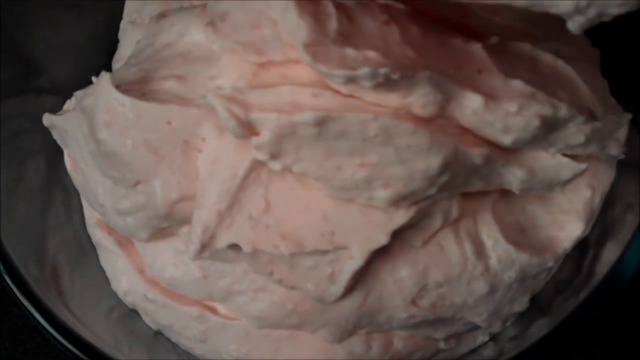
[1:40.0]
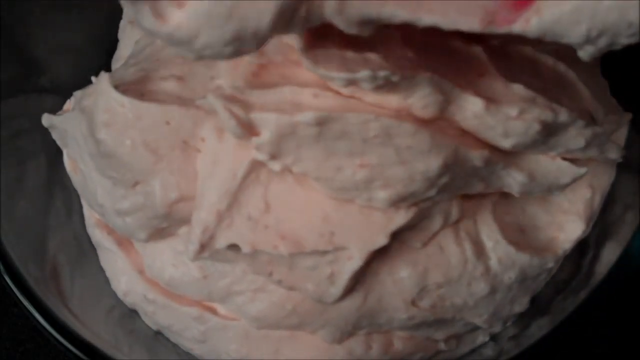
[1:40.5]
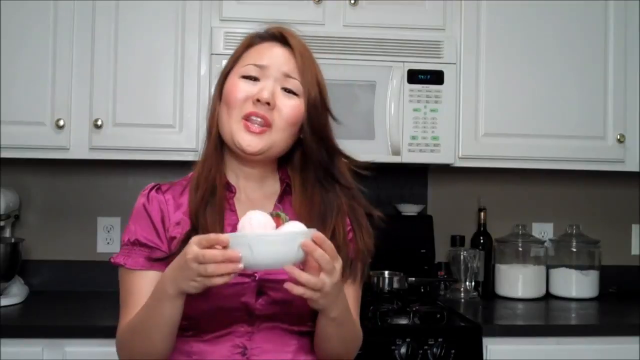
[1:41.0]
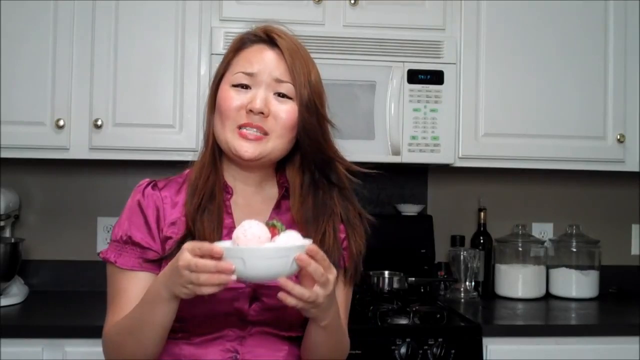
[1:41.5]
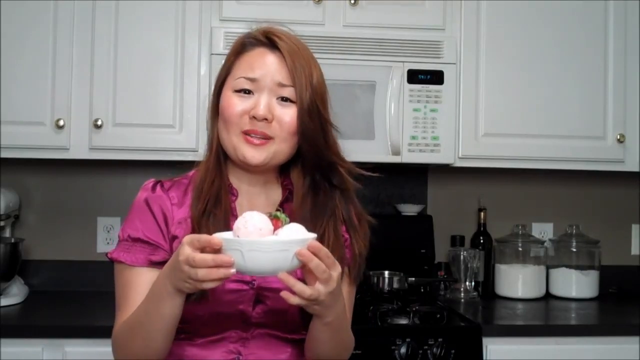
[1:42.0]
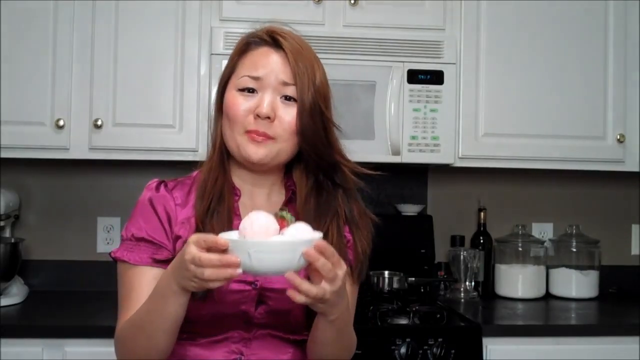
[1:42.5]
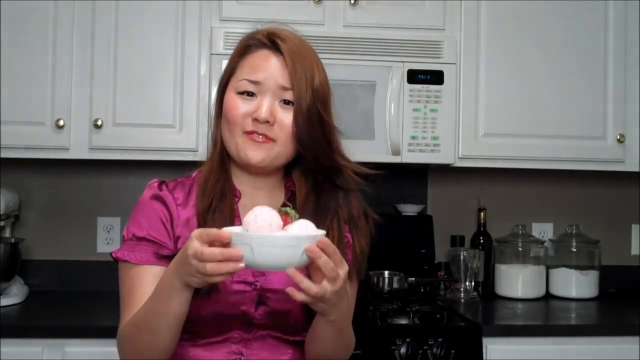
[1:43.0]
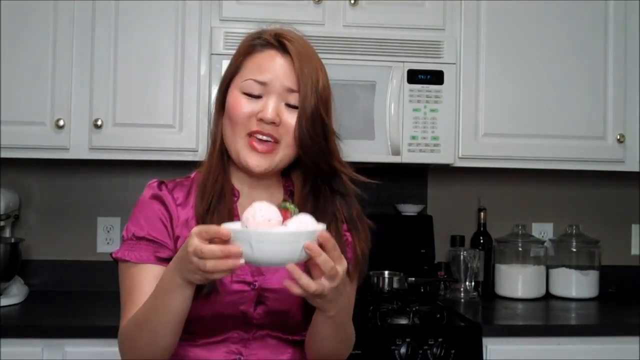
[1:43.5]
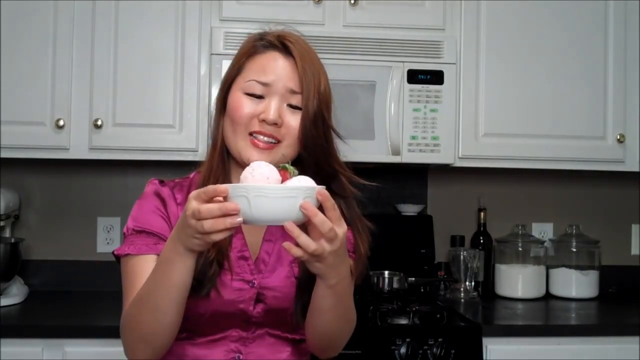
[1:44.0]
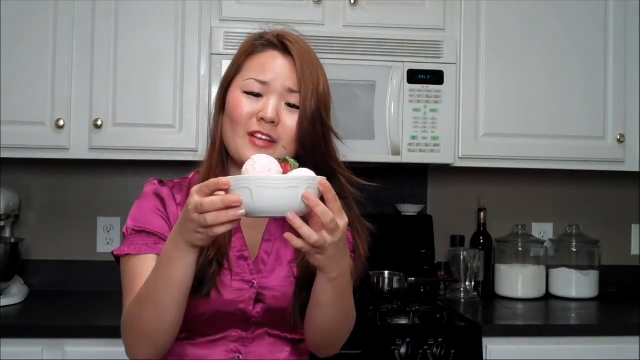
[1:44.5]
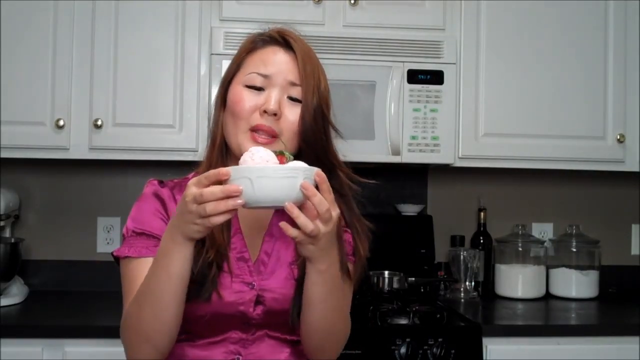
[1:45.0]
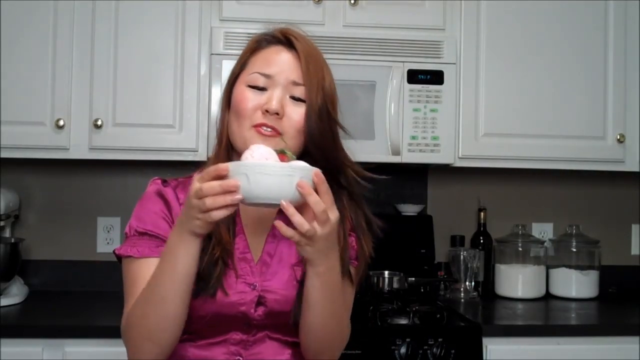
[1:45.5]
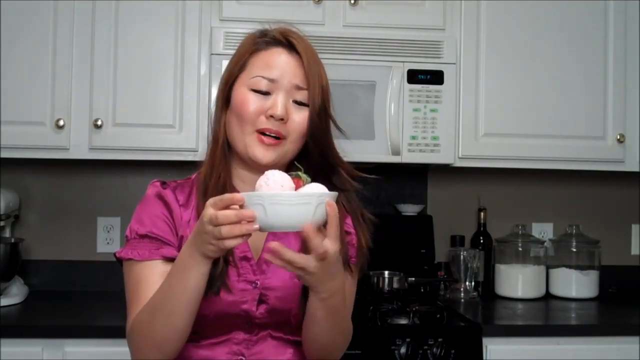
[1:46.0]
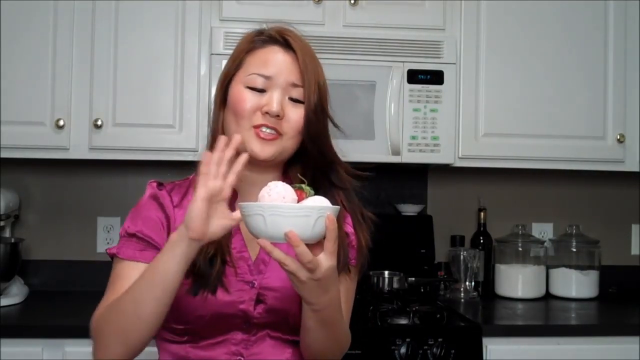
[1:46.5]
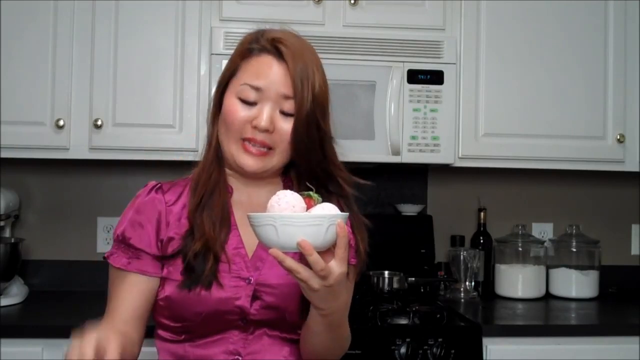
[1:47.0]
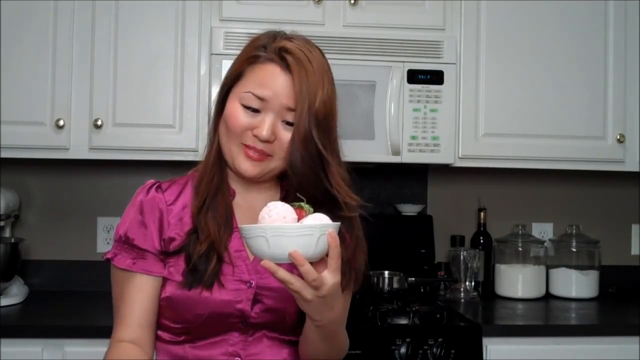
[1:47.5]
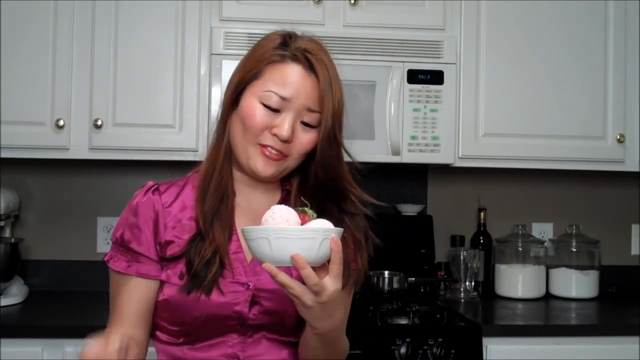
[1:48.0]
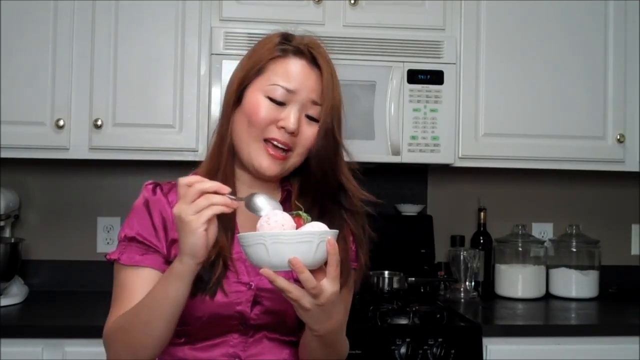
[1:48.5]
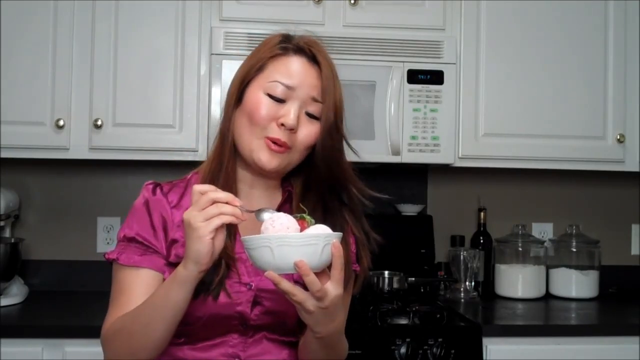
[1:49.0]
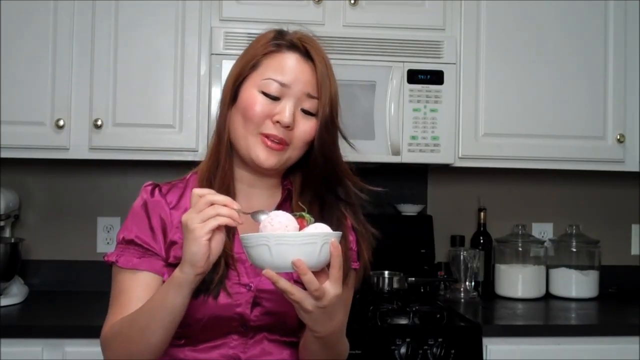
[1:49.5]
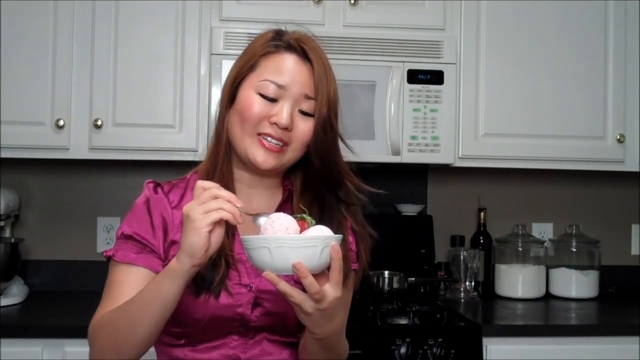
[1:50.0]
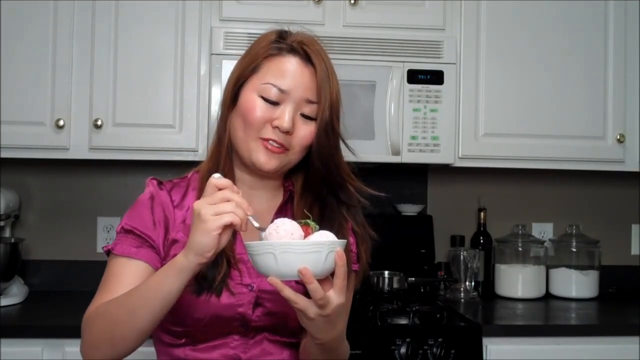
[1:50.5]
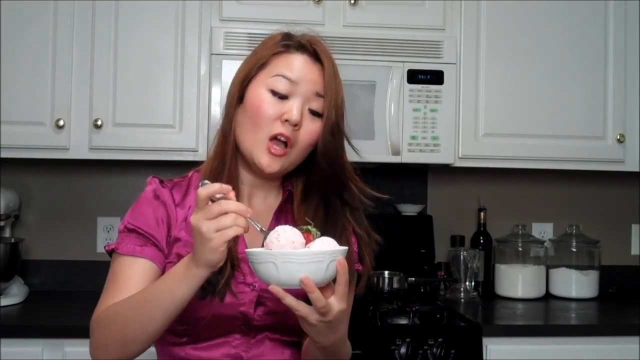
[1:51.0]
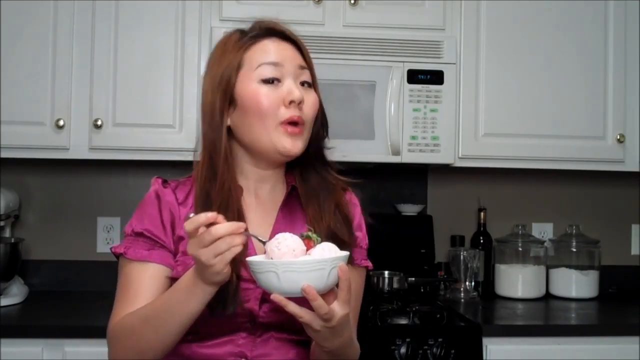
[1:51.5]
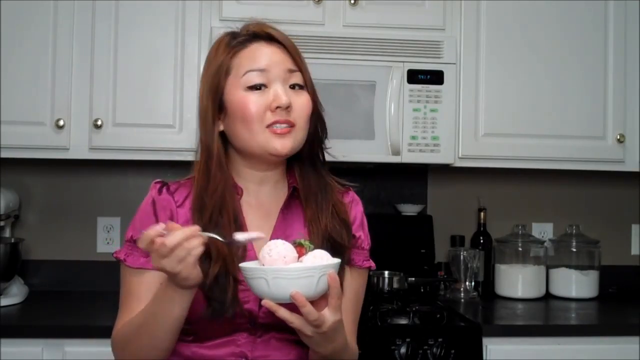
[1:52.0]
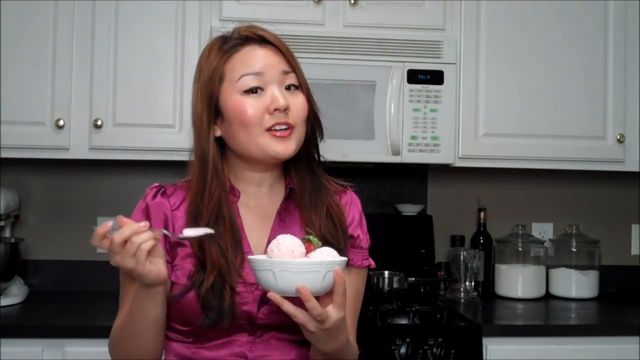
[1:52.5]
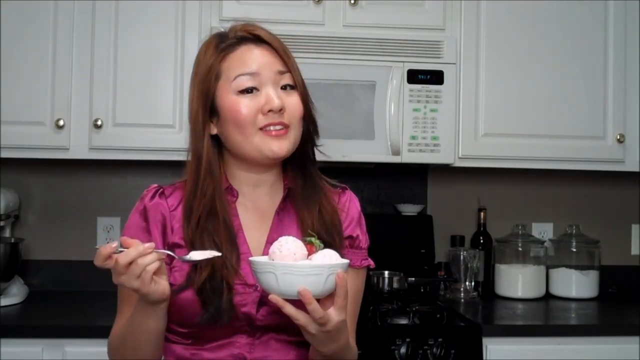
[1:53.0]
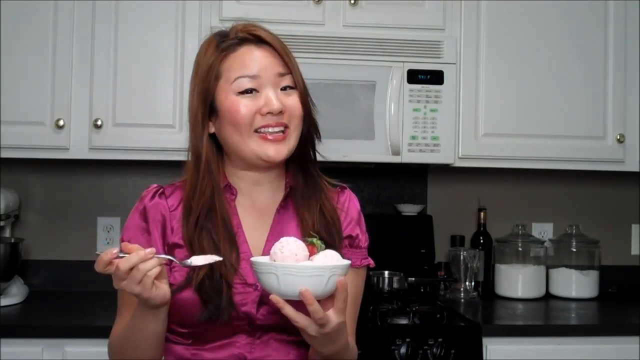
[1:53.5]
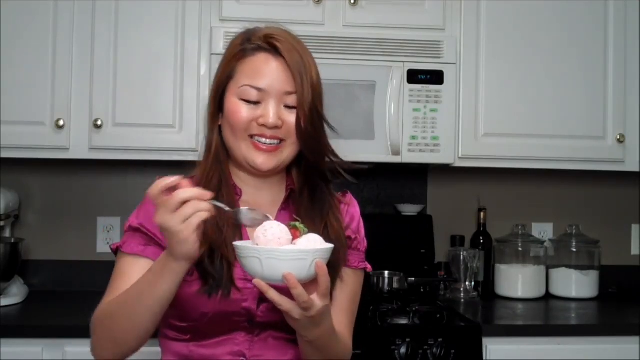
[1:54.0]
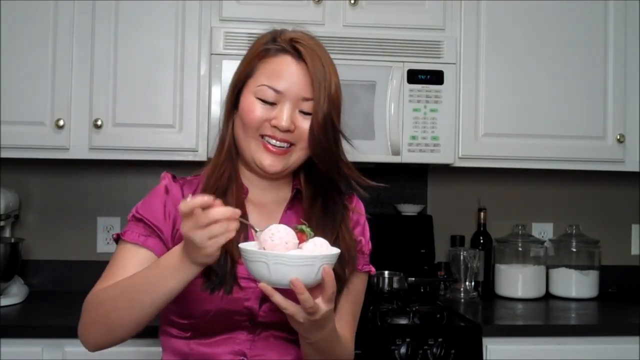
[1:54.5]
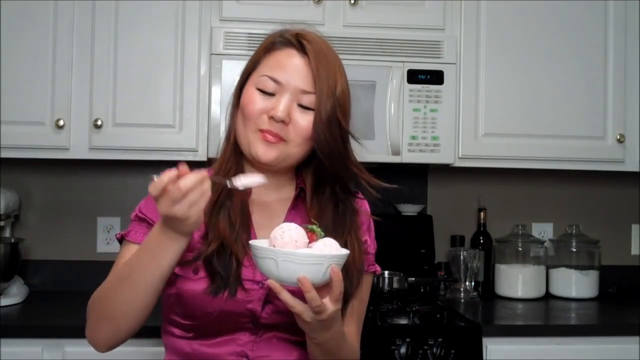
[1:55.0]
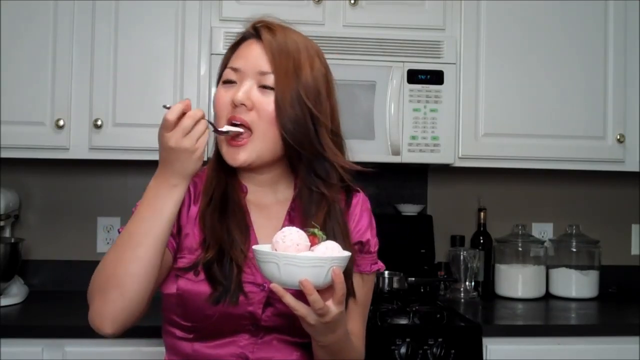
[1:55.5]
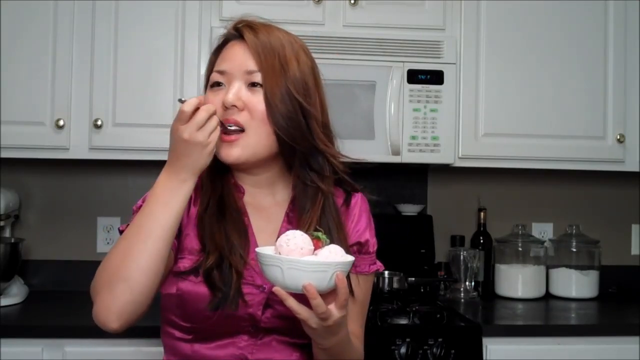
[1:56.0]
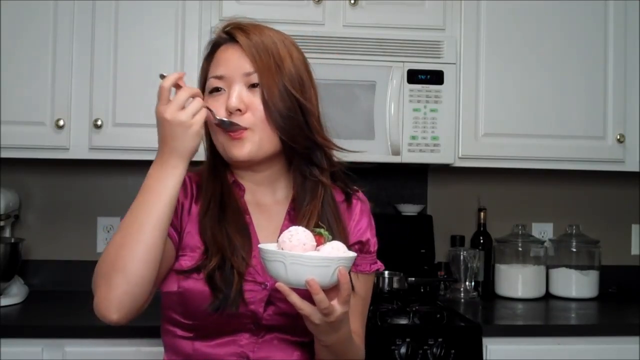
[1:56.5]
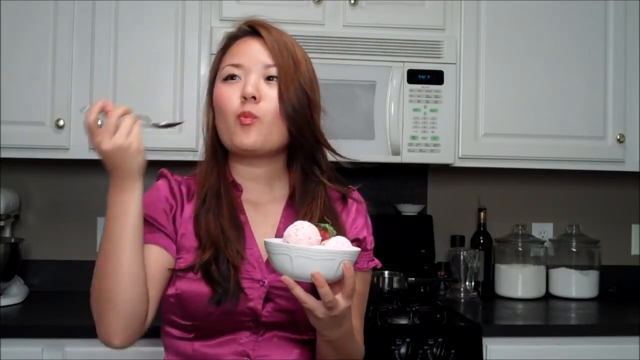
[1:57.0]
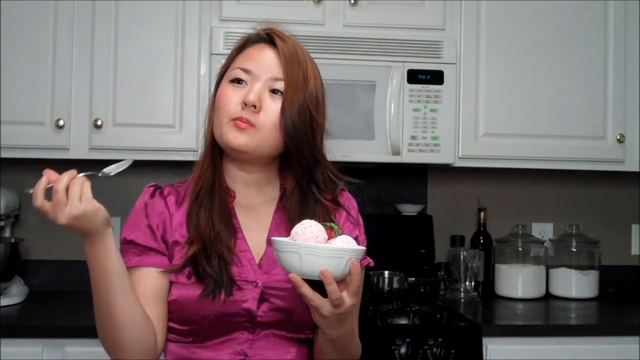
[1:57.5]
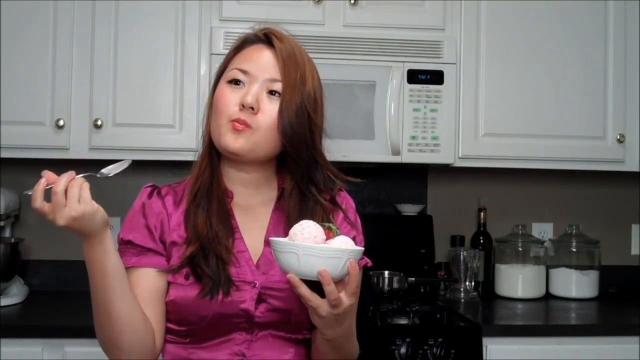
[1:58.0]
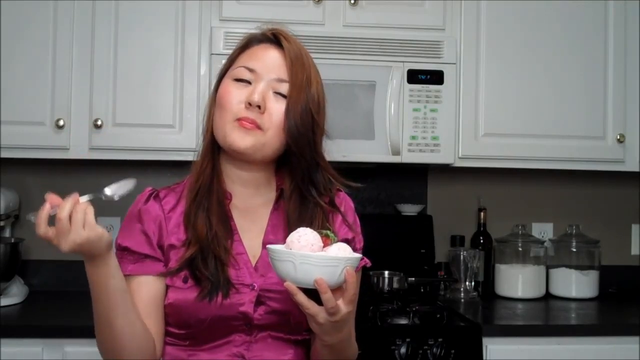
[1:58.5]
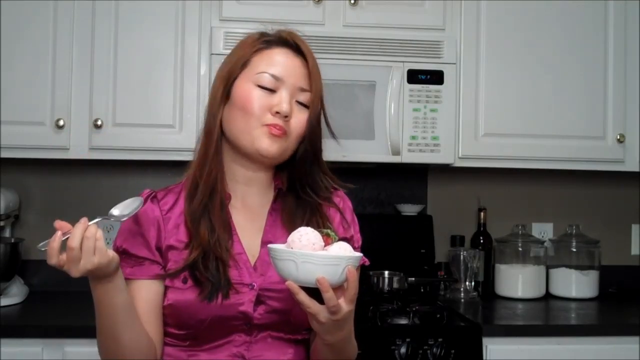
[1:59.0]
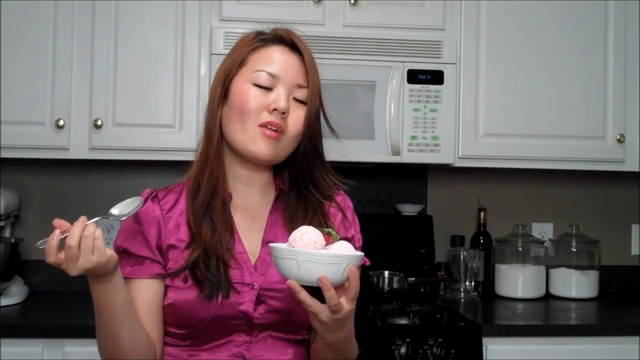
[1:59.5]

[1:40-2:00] Two scenes show strawberry ice cream or some type of pink frozen dessert being prepared. First, the camera is focused on a glass bowl filled with a pink creamy mixture, and someone scoops it into the bowl from another container. The scene then changes to a woman standing in her kitchen holding a white bowl filled with round scoops of what looks like pink or strawberry ice cream or some type of frozen dessert, with a strawberry mixed in among the scoops. She moves the bowl to her left hand while still holding it up, then takes a silver spoon in her right hand. She scoops out some of the ice cream, puts it in her mouth, and makes a face that indicates it is delicious. She wears a shiny short-sleeved fuchsia blouse. Behind her, the kitchen cabinets and microwave are white, and the countertop and the range below the microwave are black.